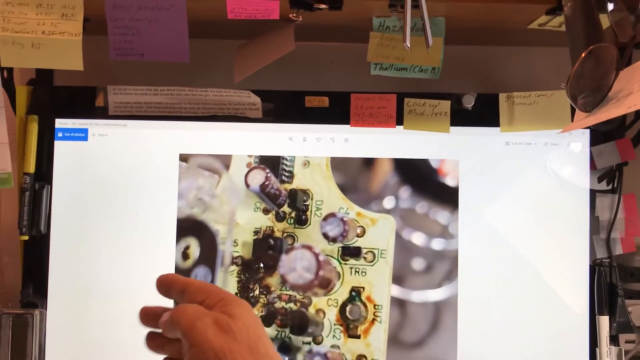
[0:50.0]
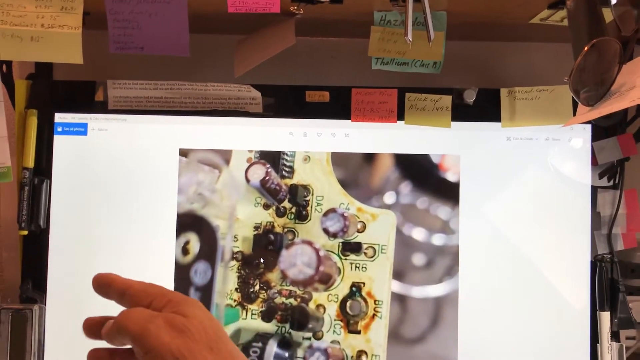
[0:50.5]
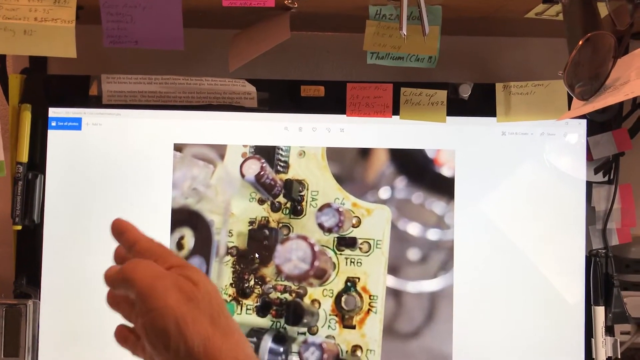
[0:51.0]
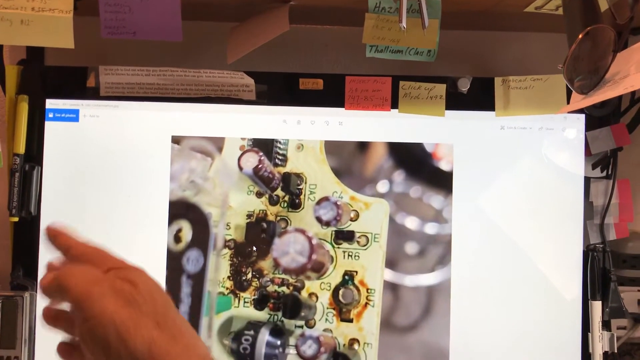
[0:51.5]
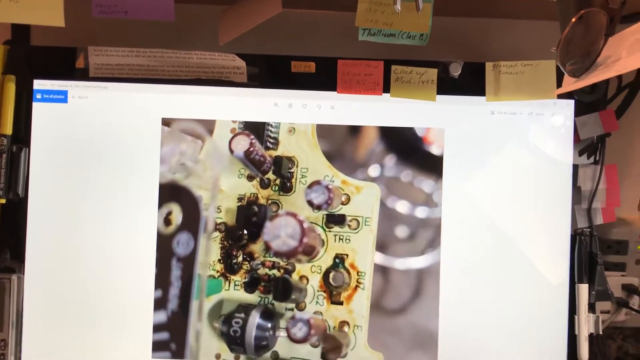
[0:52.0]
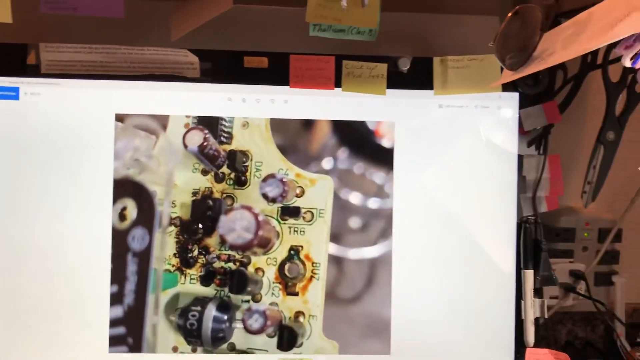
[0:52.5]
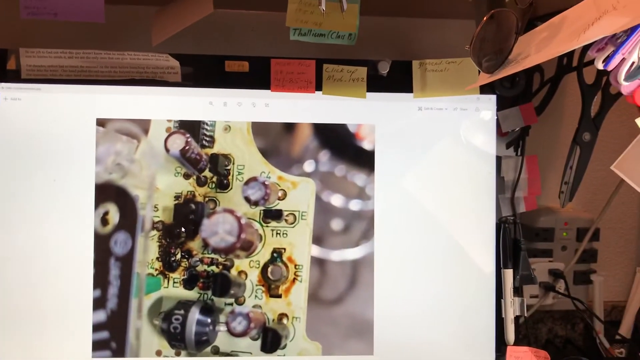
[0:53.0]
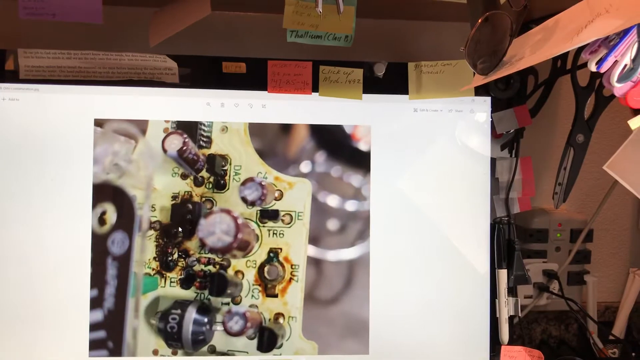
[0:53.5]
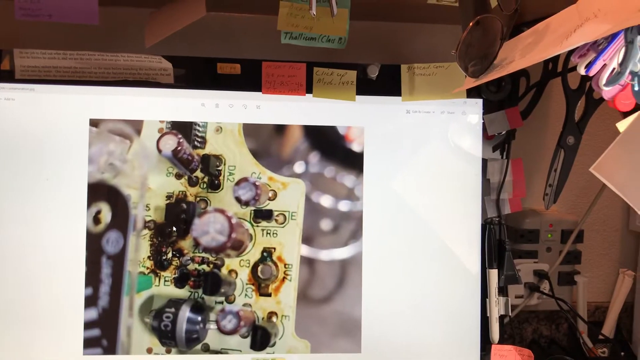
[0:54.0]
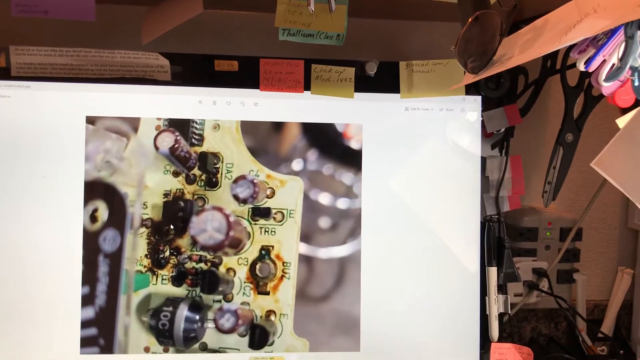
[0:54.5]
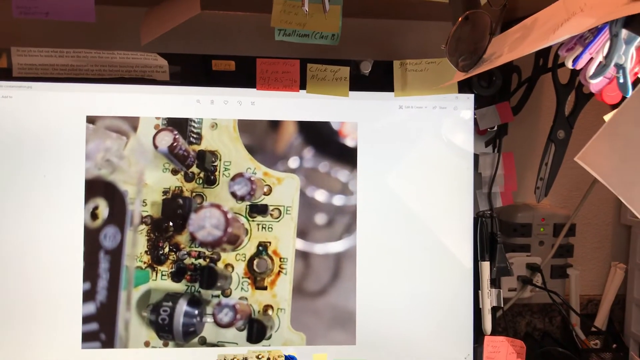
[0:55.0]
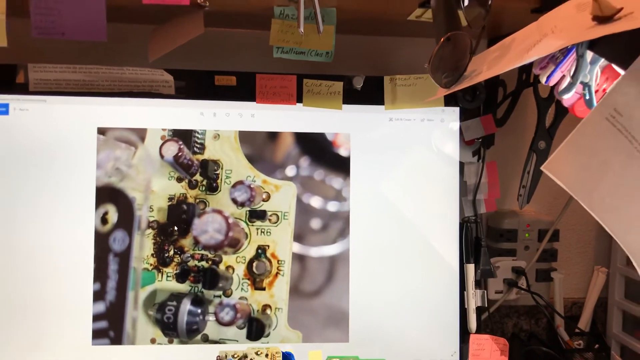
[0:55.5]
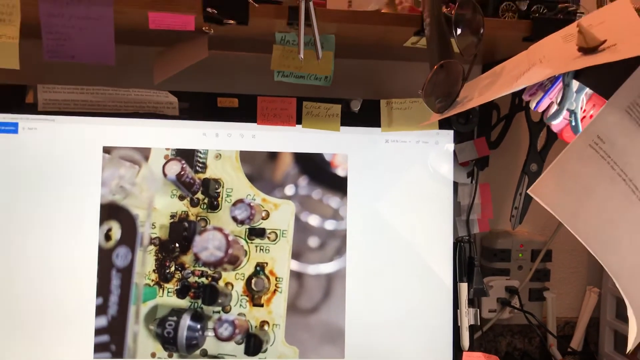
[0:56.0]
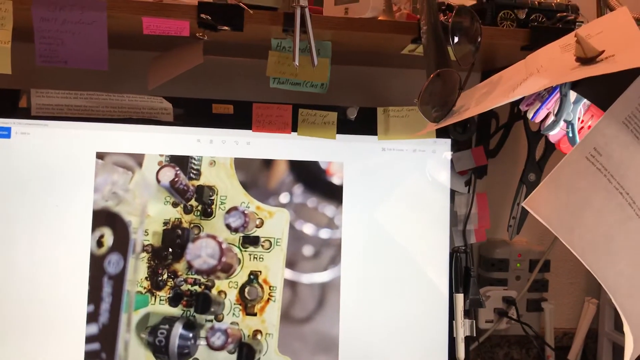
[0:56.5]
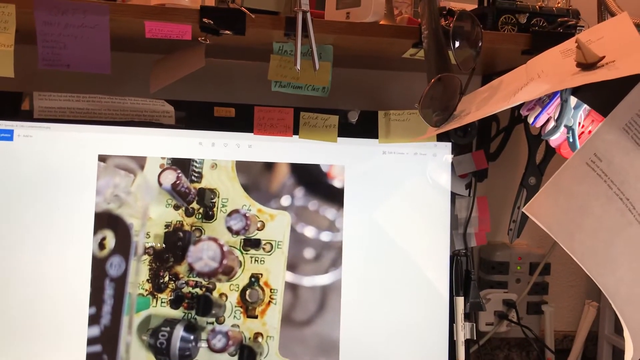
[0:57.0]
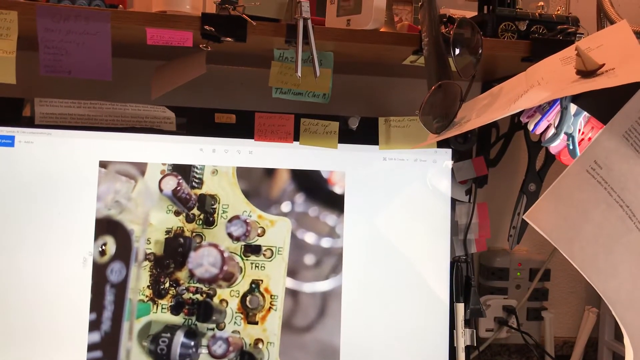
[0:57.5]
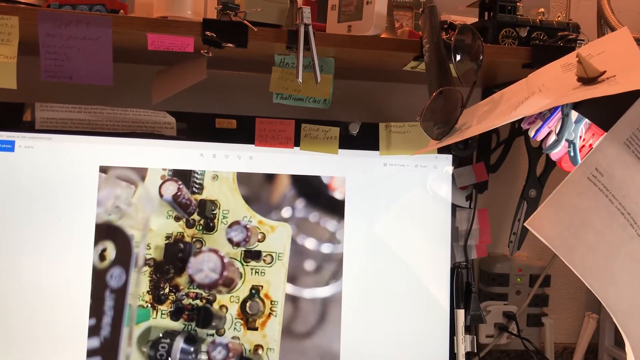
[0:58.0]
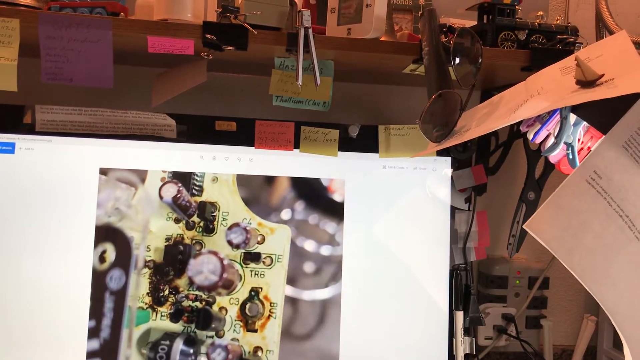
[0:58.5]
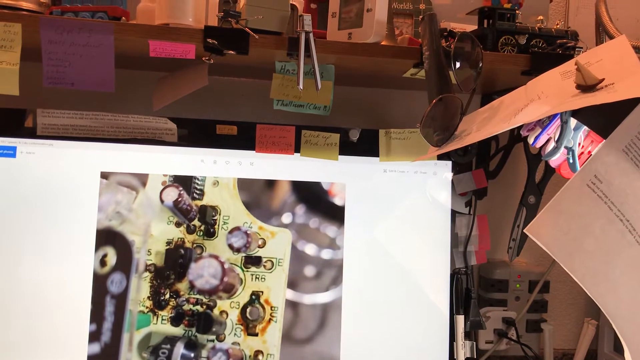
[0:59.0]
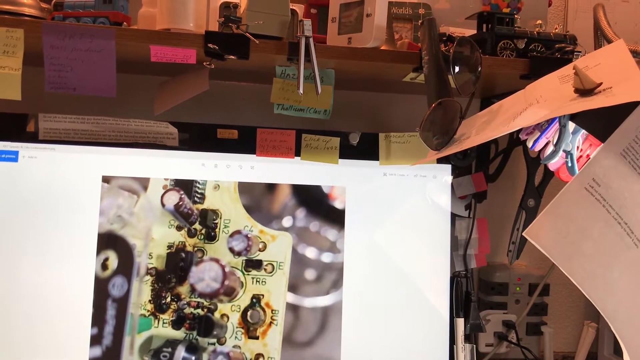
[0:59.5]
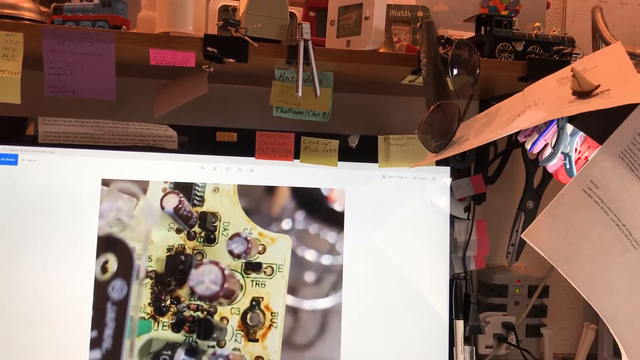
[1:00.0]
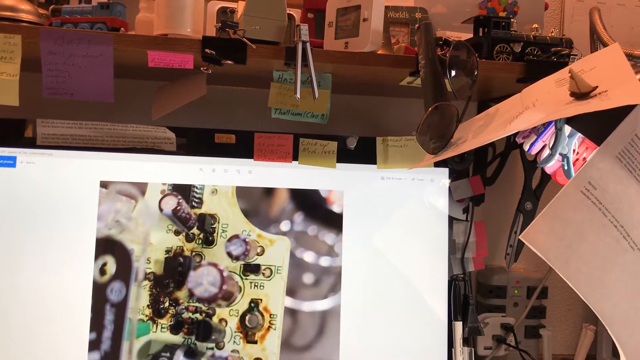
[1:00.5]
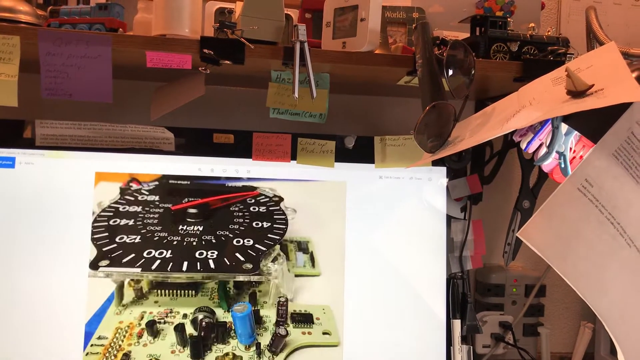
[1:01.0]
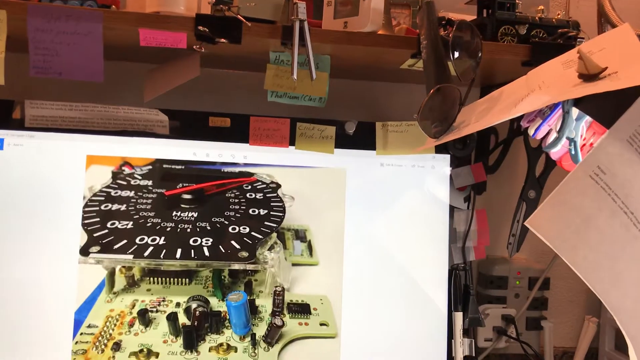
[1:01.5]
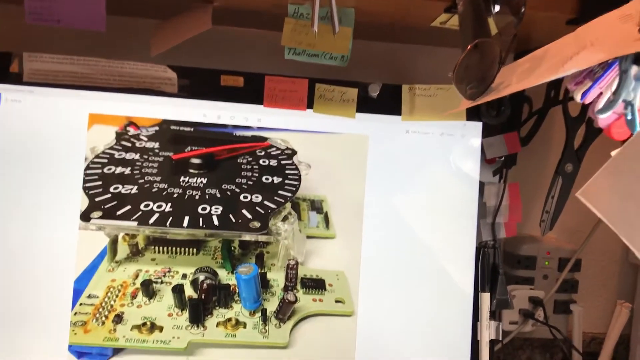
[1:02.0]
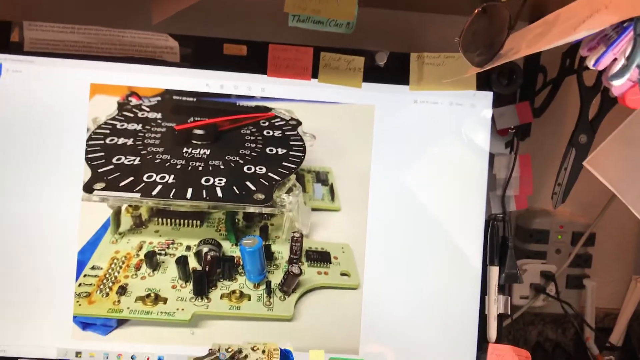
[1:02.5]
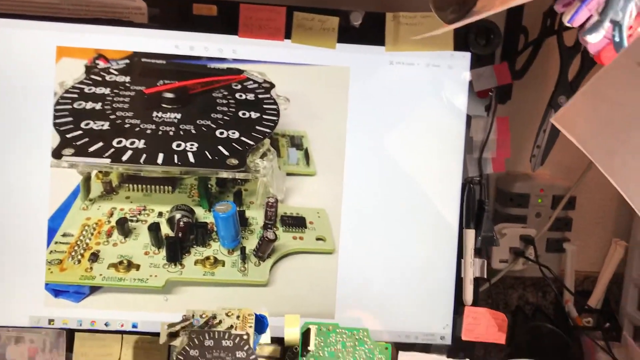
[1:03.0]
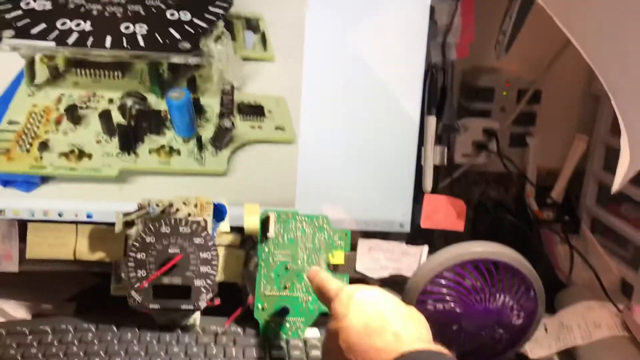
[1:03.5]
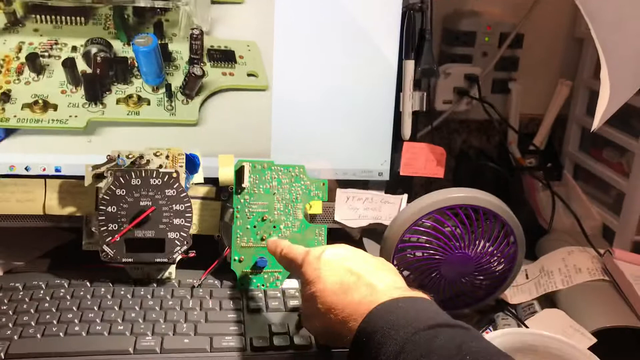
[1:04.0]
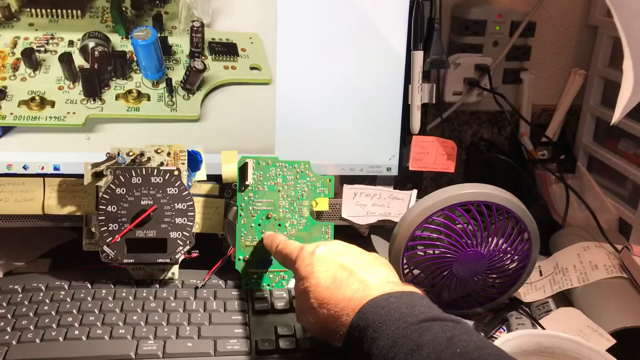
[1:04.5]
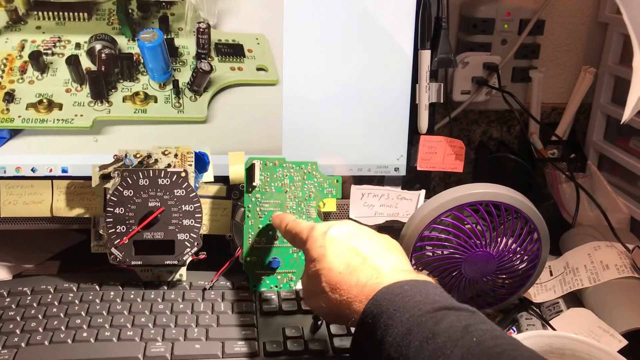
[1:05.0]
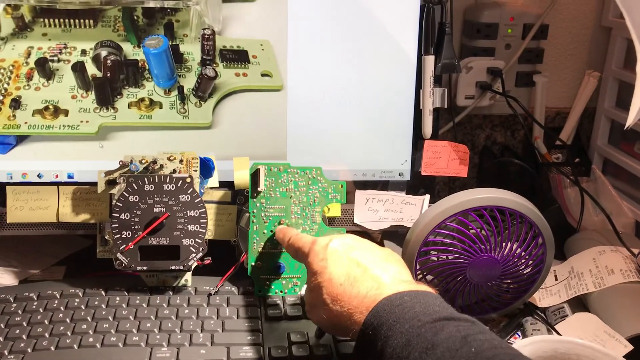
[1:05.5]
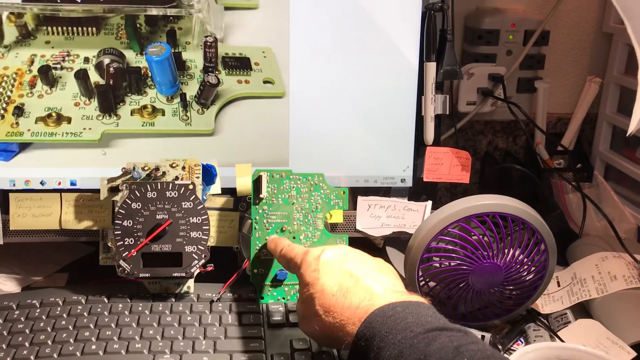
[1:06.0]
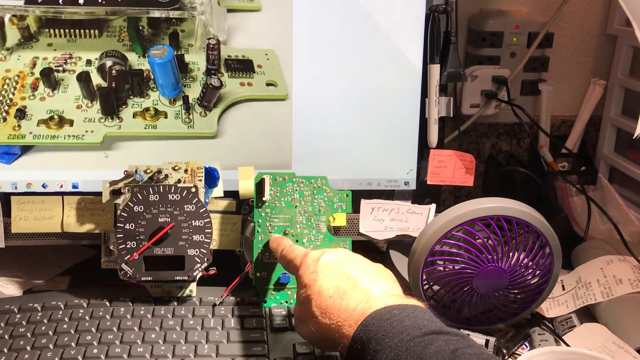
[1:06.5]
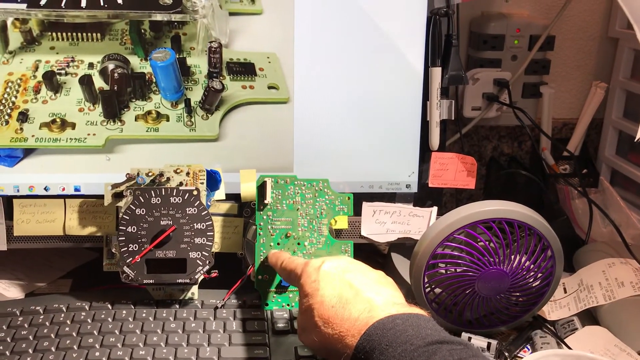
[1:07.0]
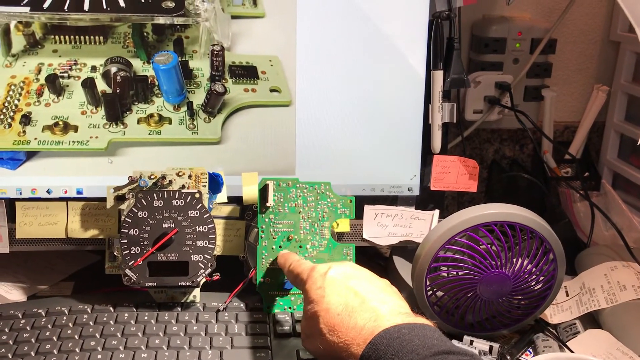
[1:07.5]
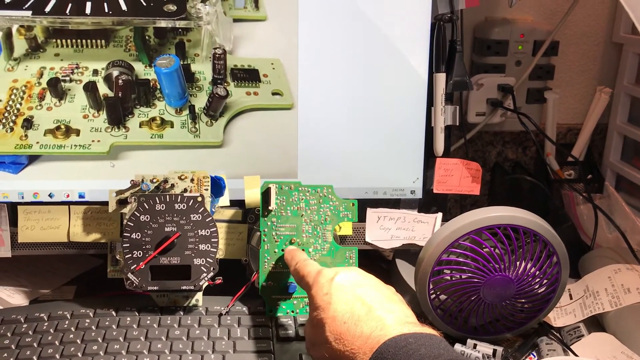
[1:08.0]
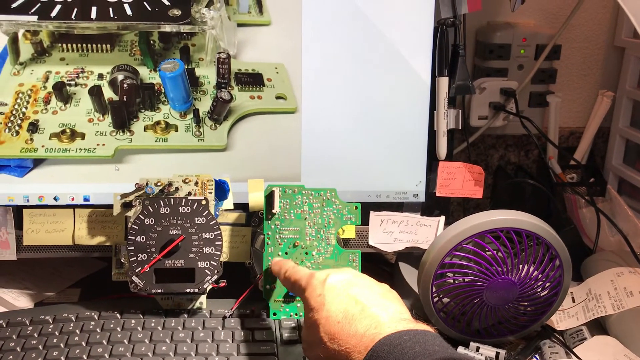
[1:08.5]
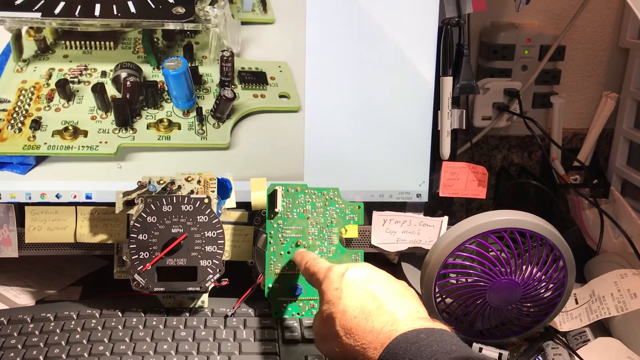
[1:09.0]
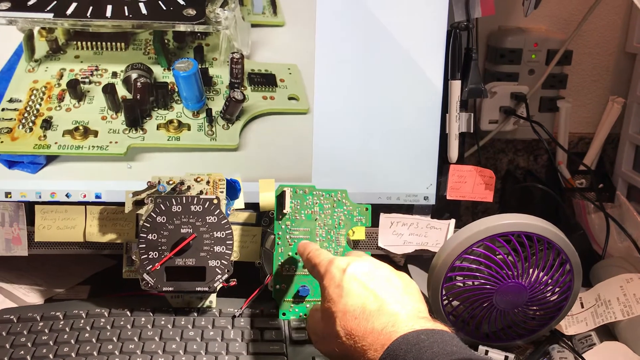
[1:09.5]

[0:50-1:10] The very large monitor shows a picture of the speedometer, and two speedometers lean against the monitor. The keyboard, the very messy desk and the little fan with purple on it are shown, and the view stays on the monitor for a while. A finger points at the little blue thing, and then the whole hand moves. He circles on the close-up of the CPU with his hand moving. Then he points at the actual speedometer, one of the two speedometers sitting on the desk, pointing at the back of it where it is green.